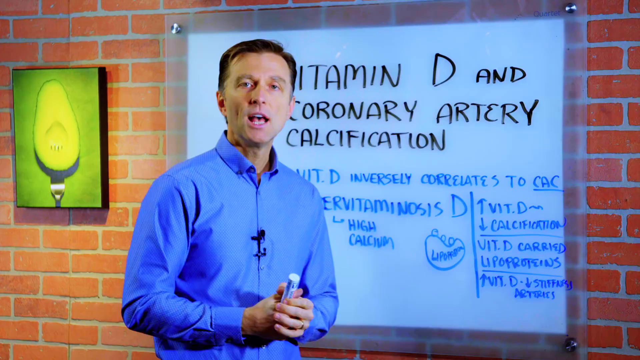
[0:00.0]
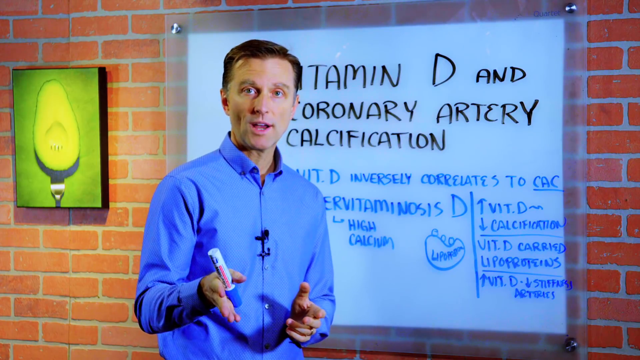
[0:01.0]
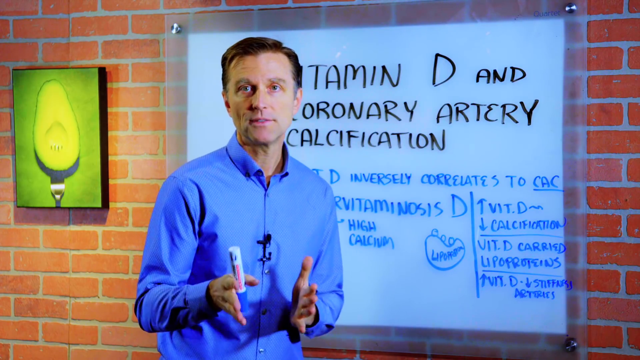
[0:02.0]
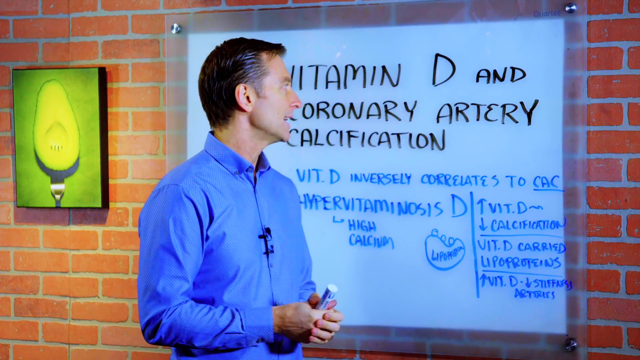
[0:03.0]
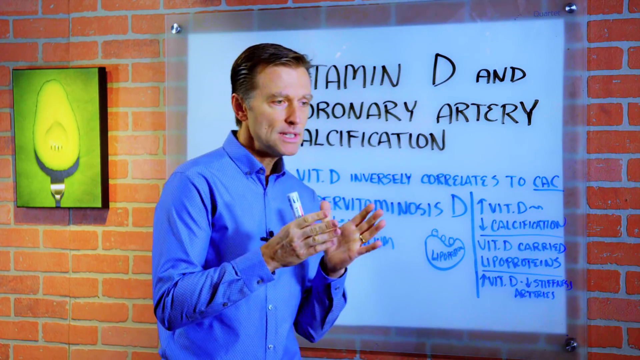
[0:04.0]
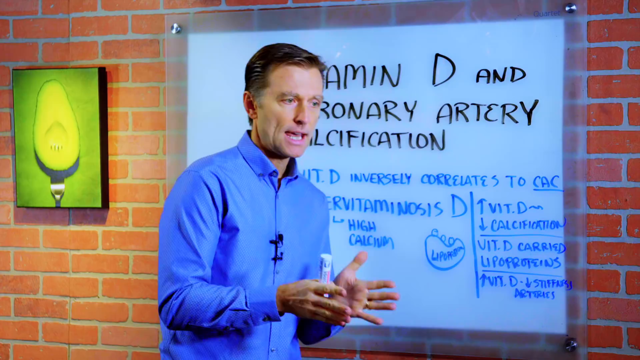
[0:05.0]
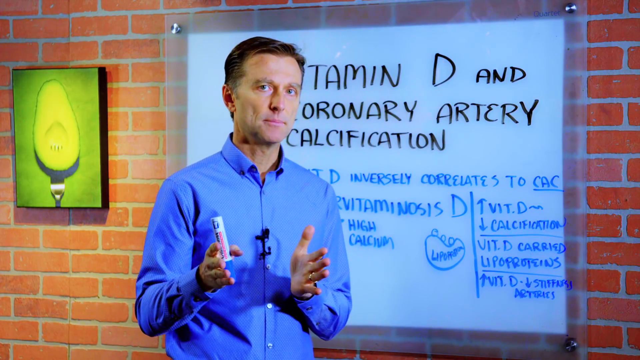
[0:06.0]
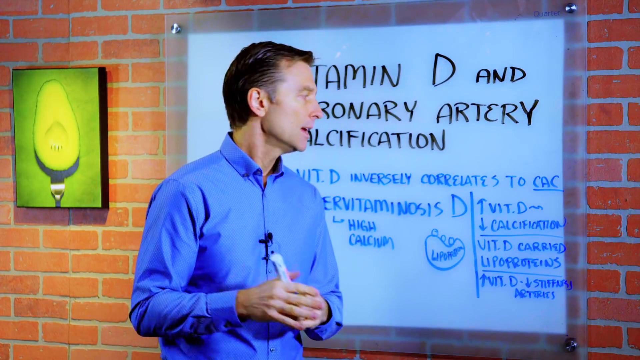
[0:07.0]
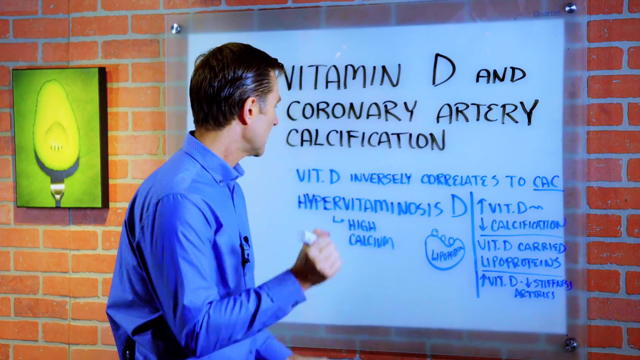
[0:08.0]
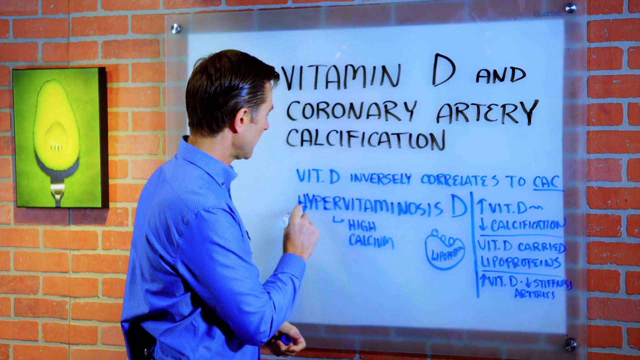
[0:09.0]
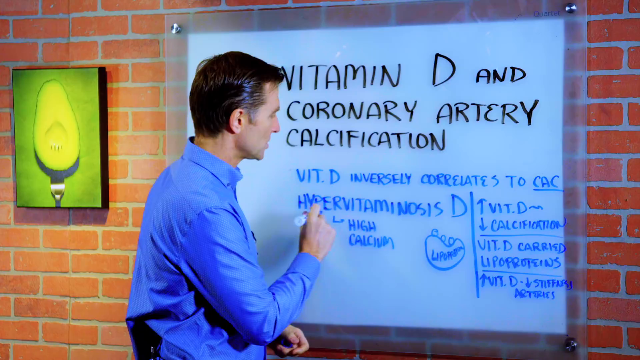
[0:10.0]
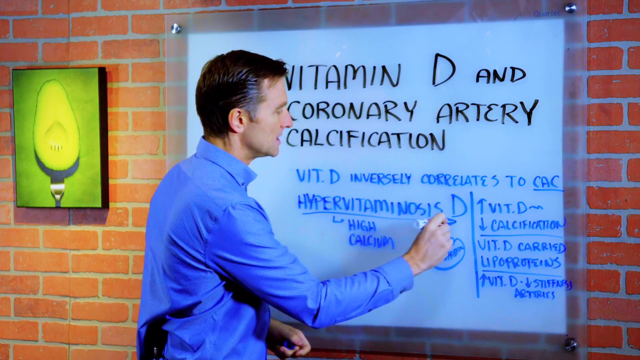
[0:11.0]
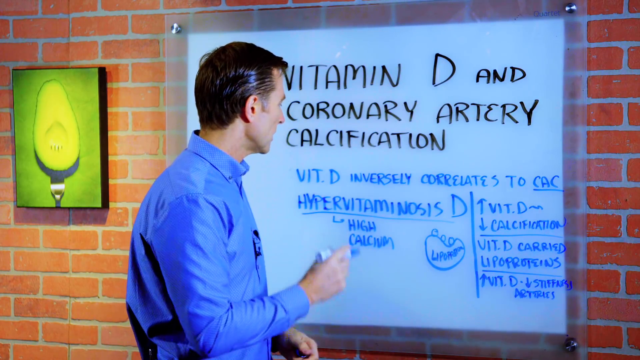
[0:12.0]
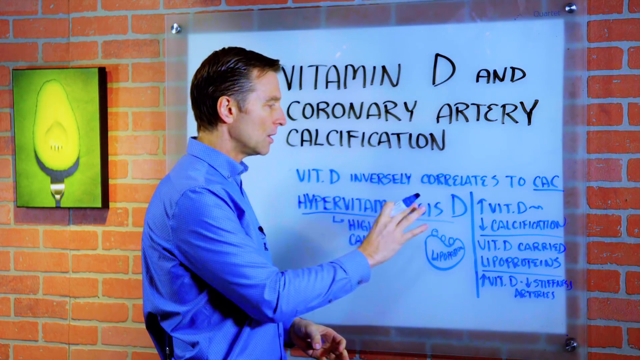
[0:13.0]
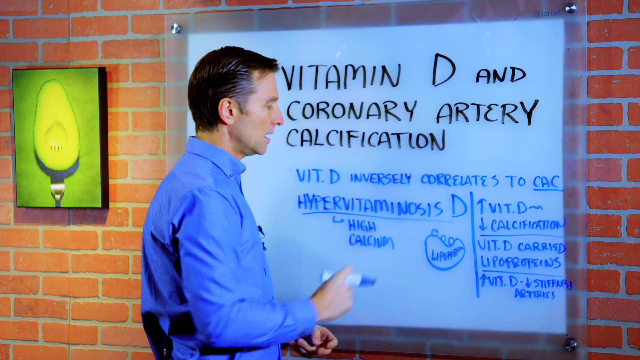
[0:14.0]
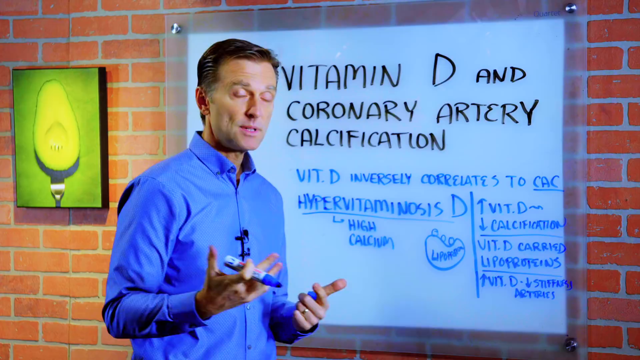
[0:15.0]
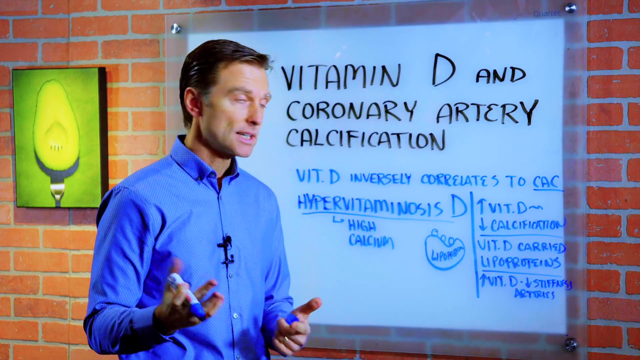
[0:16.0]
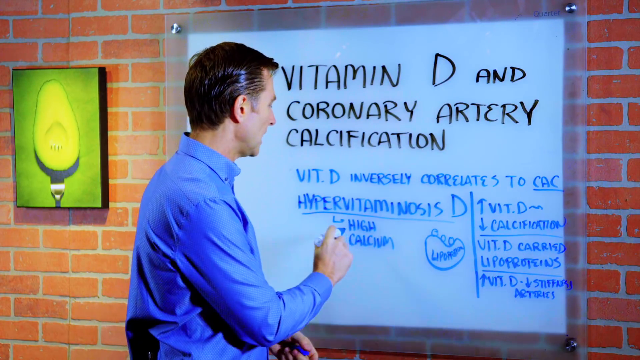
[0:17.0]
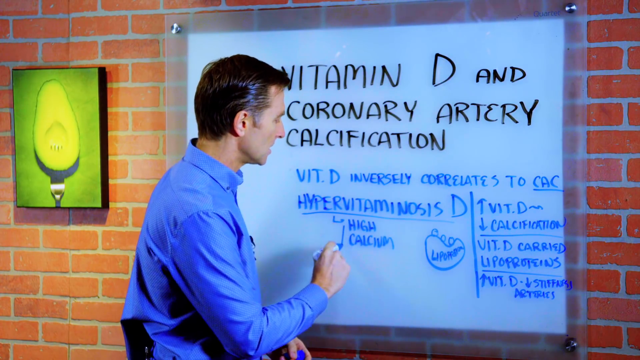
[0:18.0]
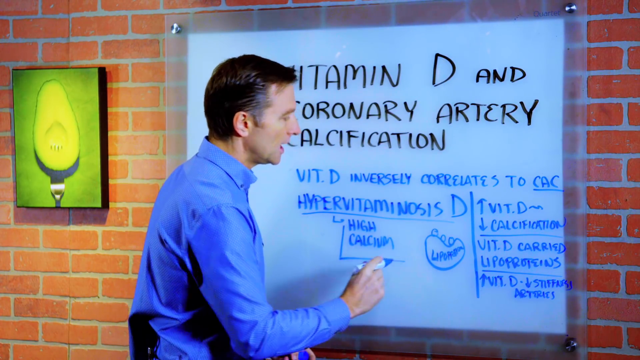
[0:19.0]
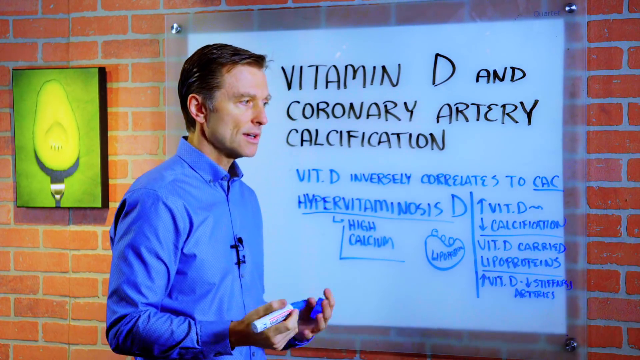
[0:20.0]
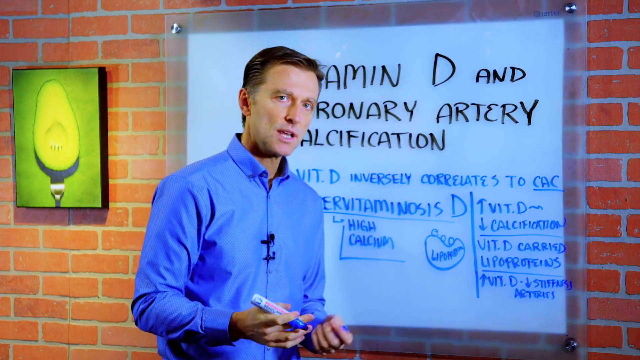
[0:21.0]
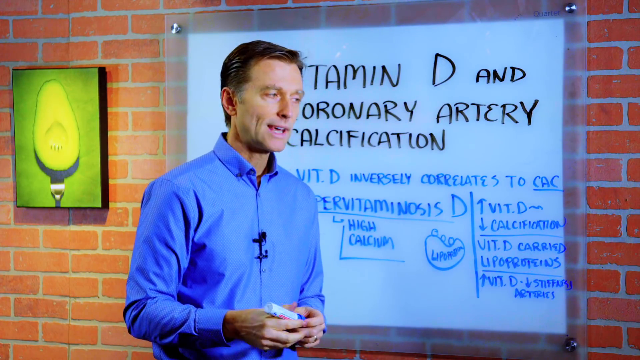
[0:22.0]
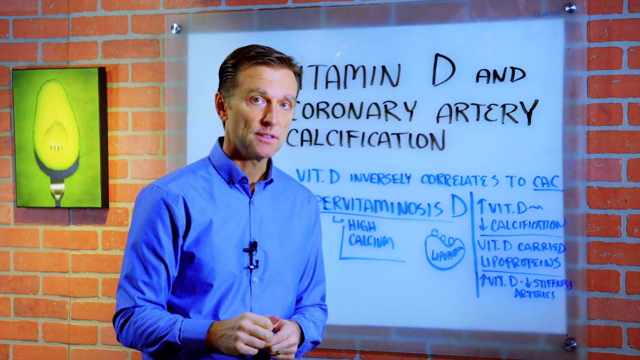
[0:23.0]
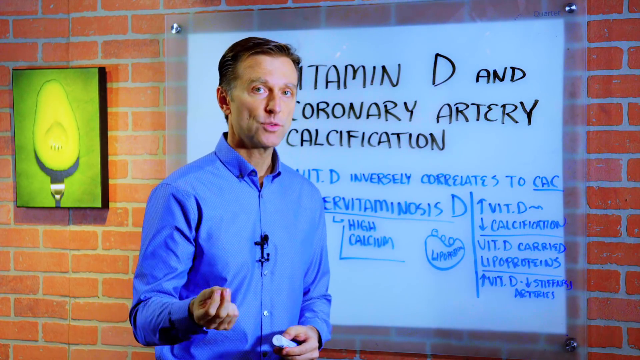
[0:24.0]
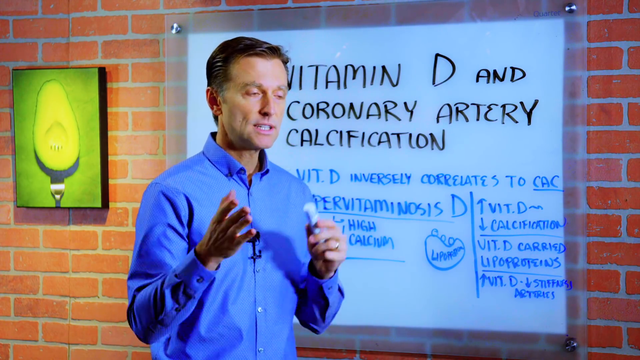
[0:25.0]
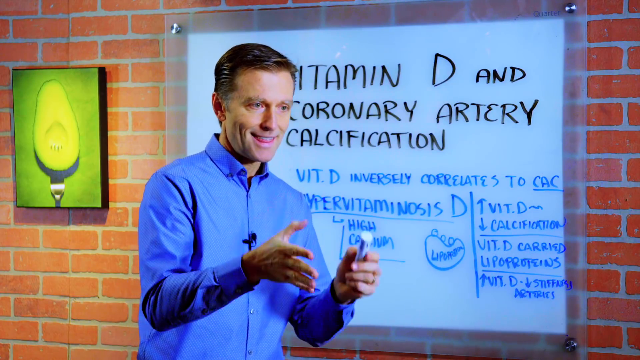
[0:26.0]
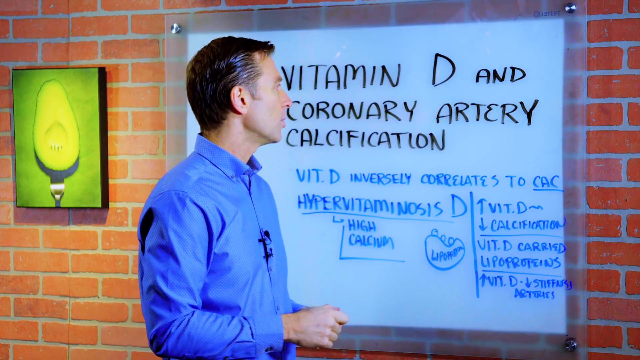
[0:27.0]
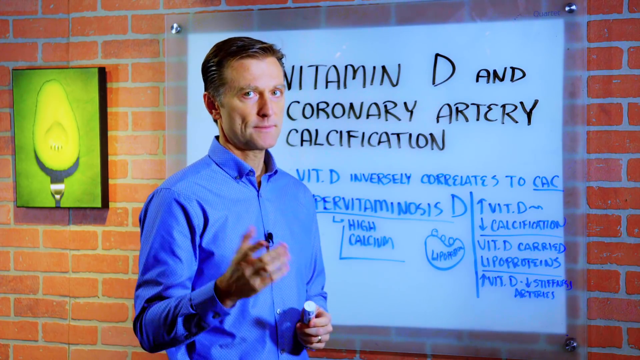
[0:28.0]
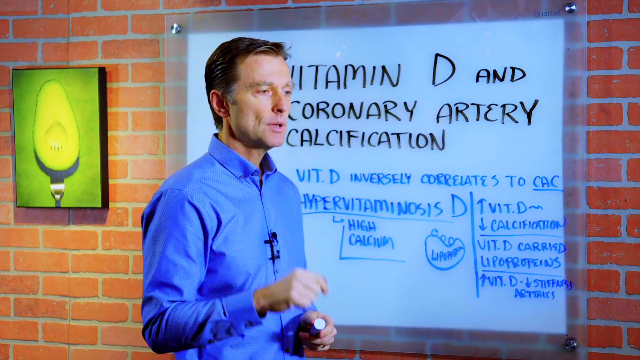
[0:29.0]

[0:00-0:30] A man who looks to be in his 40s stands holding a dry erase marker in front of a brick wall. Behind him, it looks like he has written "Vitamin D and Coronary Artery Calcification." He speaks with a microphone right in front of him. He wears what appears to be a blue shirt, with a black microphone running down his shirt. Underneath the title, in blue, it says "vitamin D inversely correlates." He gestures with both hands in front of him, moving up and to the right. He turns and writes, then highlights an area under the vitamins section, apparently to mark it as important. His hair looks either wet or slicked back, with the top combed to his right and the sides combed back. He keeps speaking and using his hands to talk about that area. Underneath, a bracket leads to "high calcium." There is a drawing of an oval-like blob made of three circles, with a label on top that begins with "lipo," possibly "lipoprotein," though it is hard to tell. He keeps turning and speaking, then draws a line to the left of "high calcium" that goes down and then turns right at a 90-degree angle.